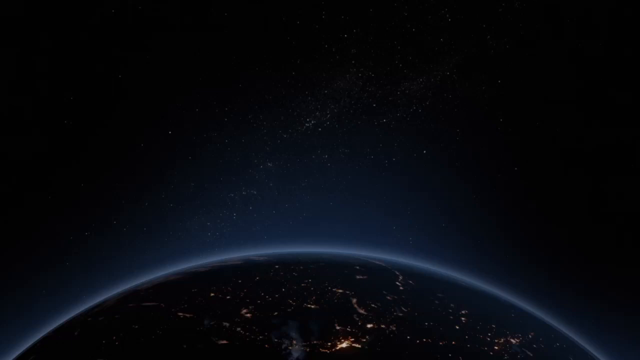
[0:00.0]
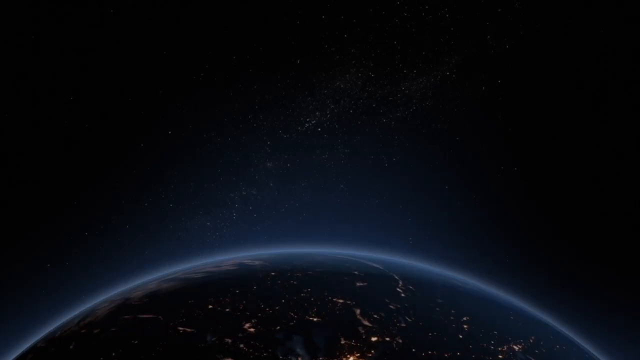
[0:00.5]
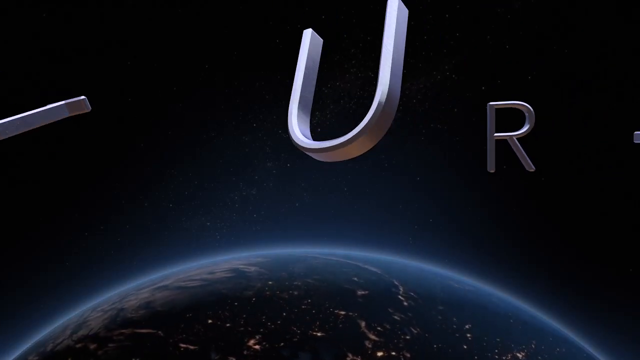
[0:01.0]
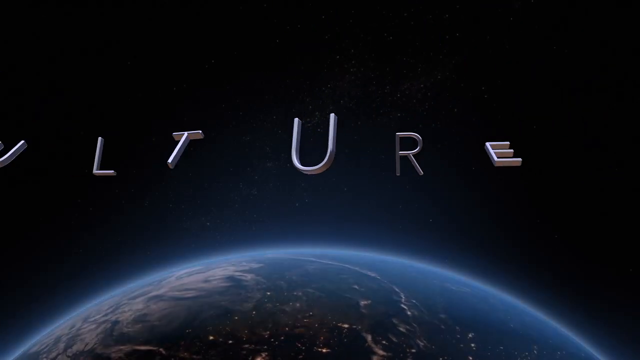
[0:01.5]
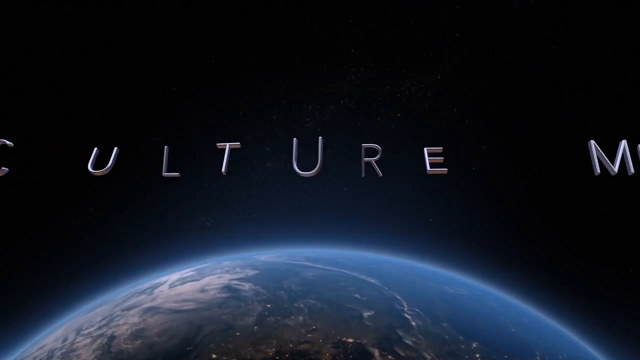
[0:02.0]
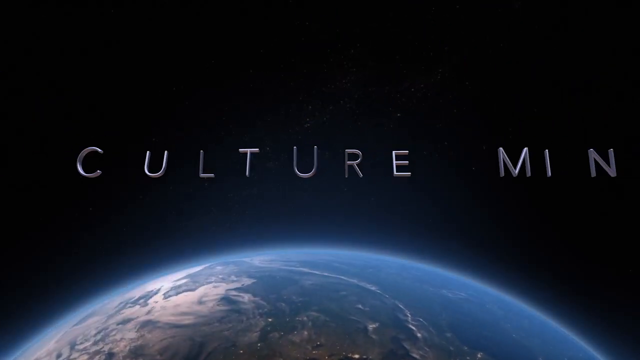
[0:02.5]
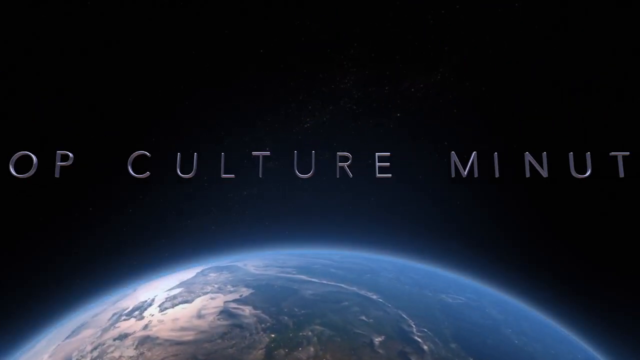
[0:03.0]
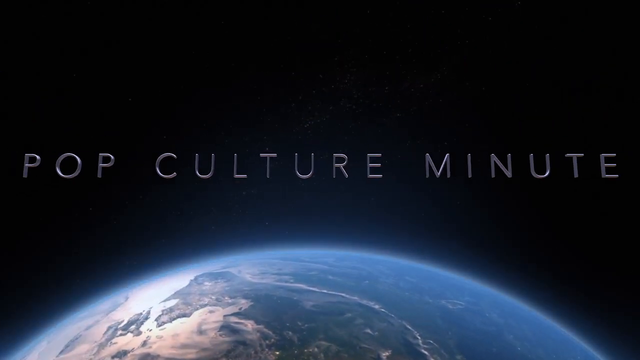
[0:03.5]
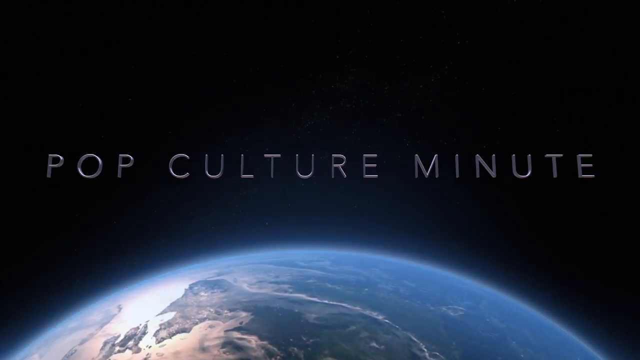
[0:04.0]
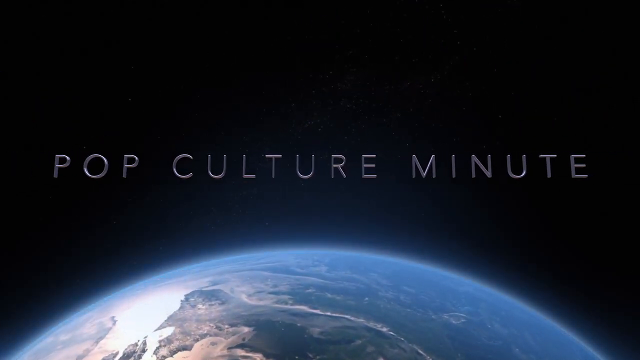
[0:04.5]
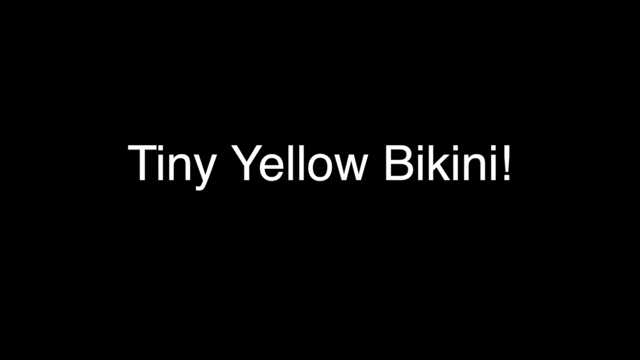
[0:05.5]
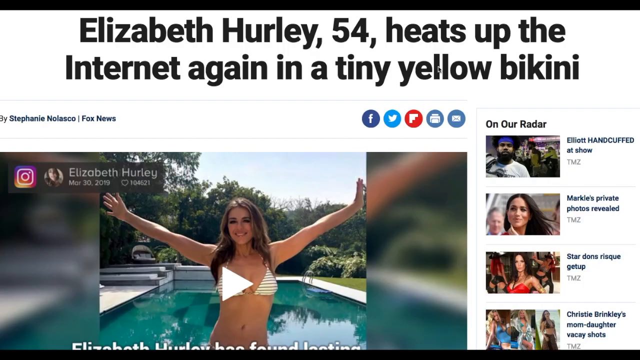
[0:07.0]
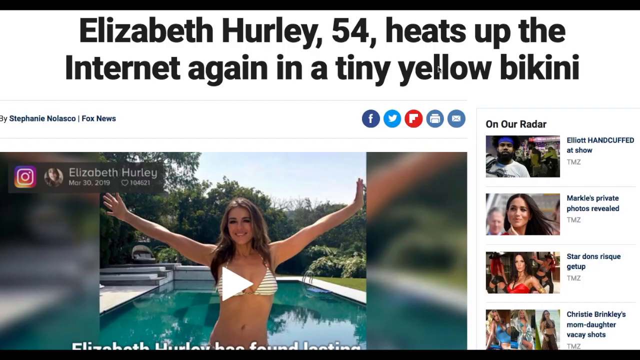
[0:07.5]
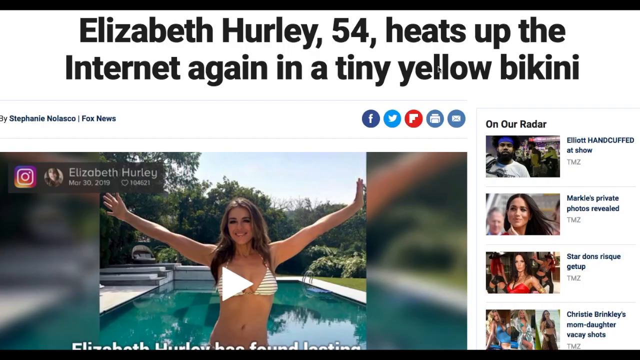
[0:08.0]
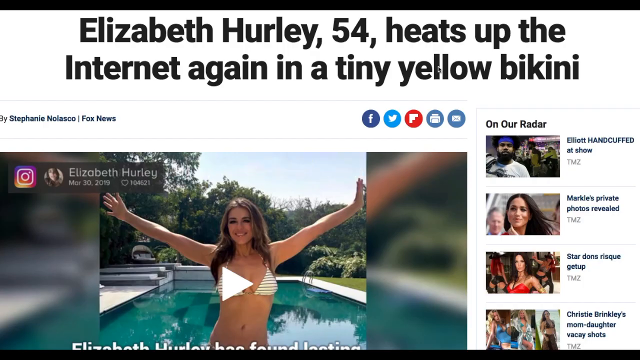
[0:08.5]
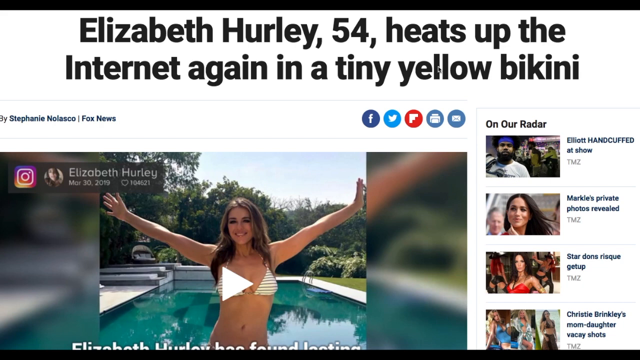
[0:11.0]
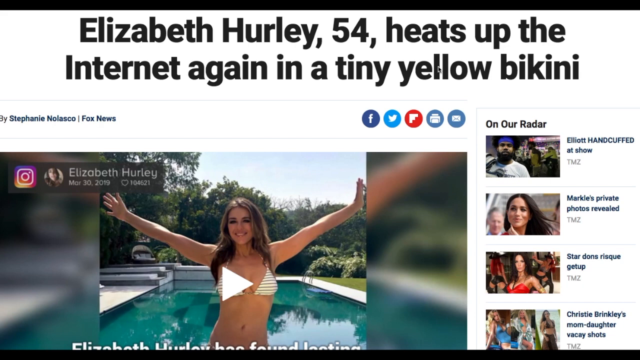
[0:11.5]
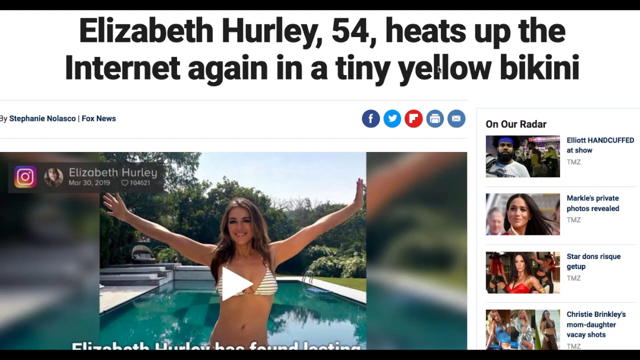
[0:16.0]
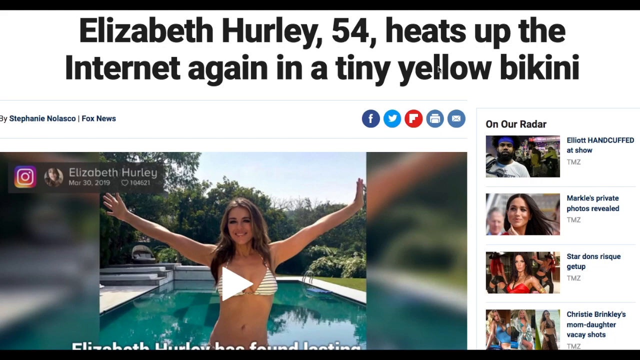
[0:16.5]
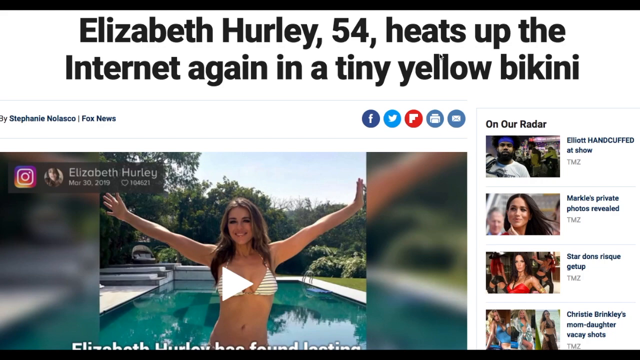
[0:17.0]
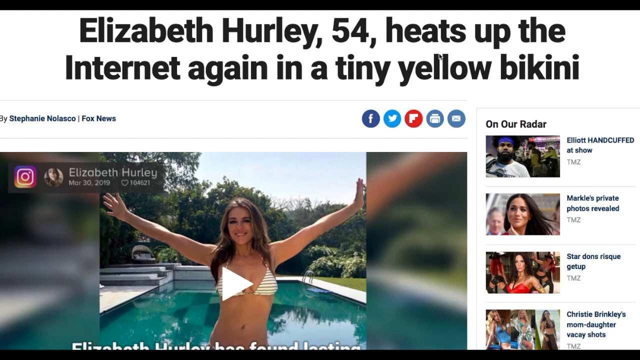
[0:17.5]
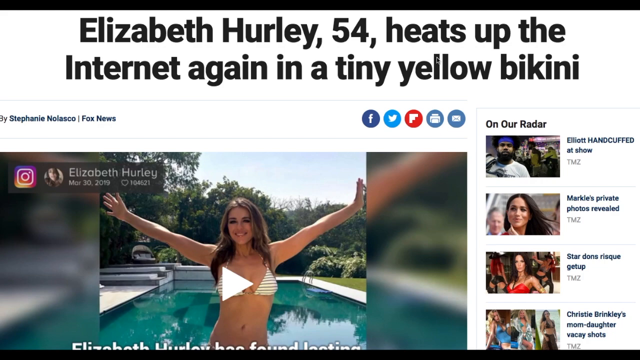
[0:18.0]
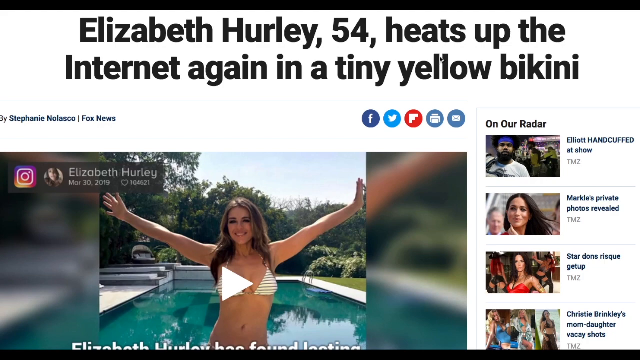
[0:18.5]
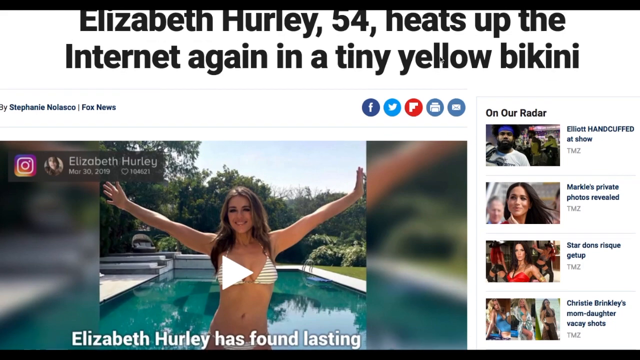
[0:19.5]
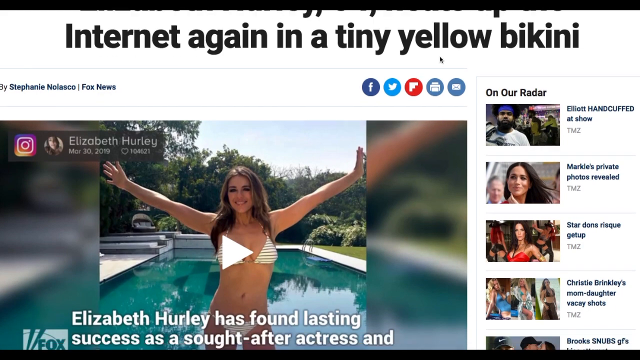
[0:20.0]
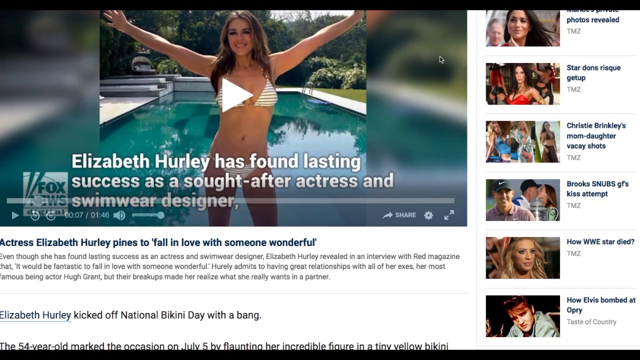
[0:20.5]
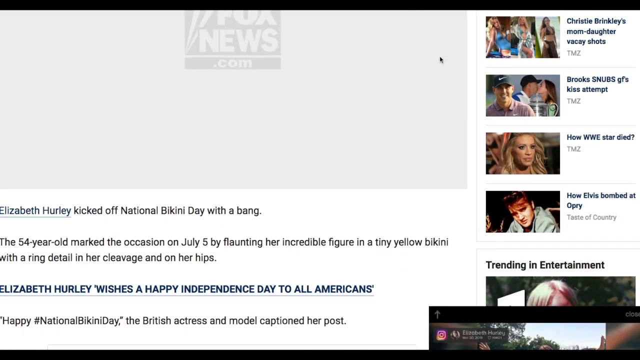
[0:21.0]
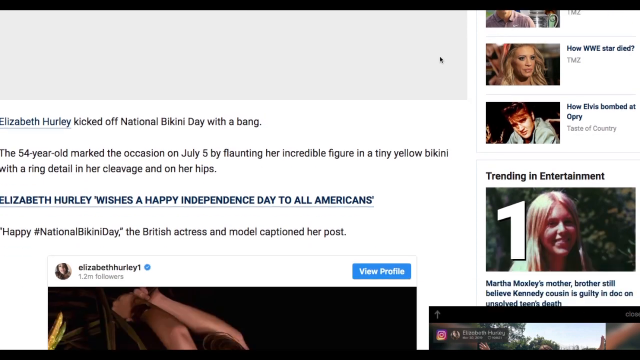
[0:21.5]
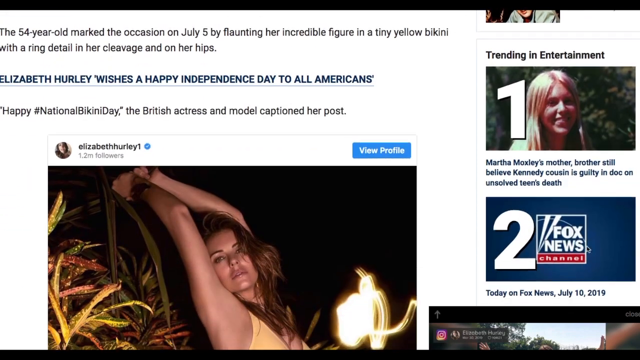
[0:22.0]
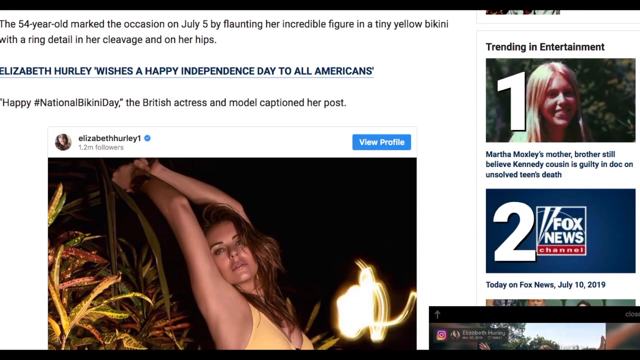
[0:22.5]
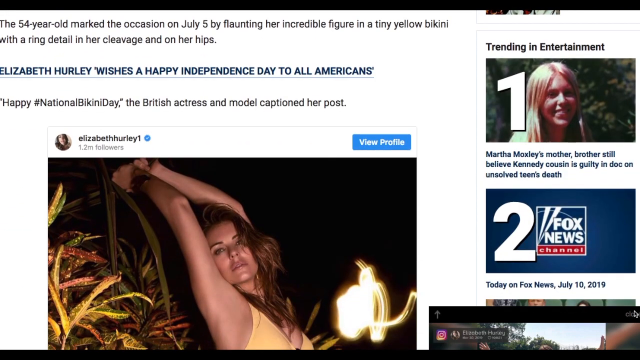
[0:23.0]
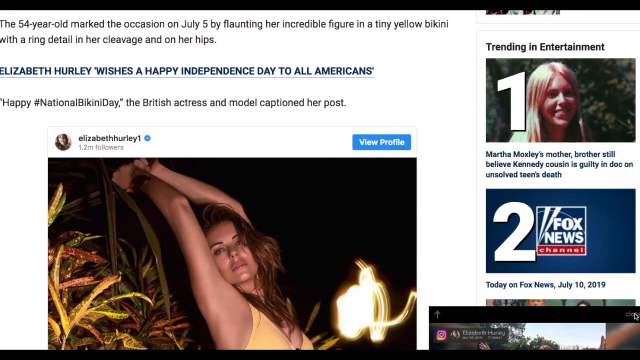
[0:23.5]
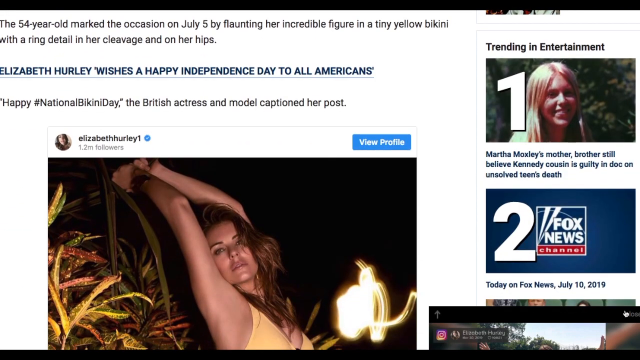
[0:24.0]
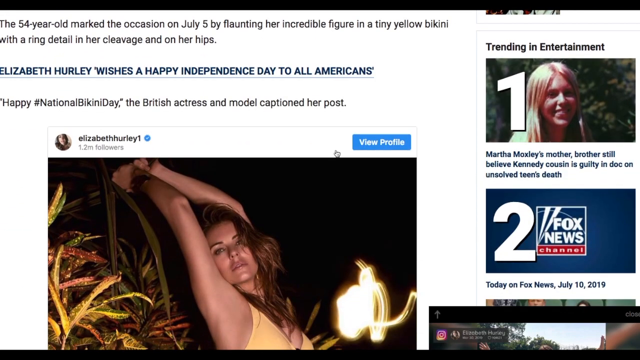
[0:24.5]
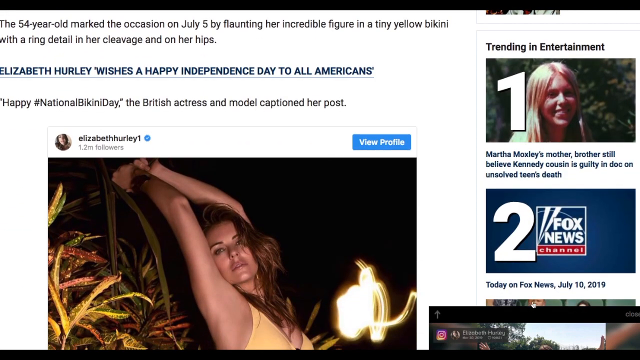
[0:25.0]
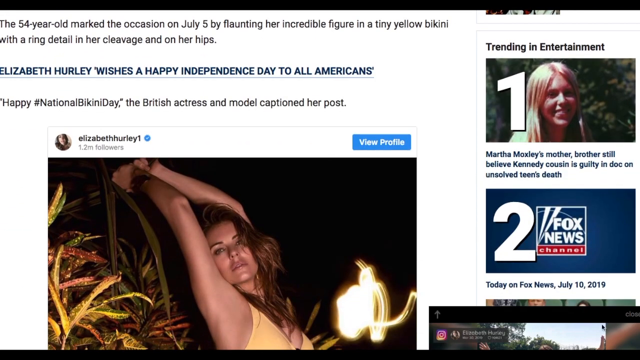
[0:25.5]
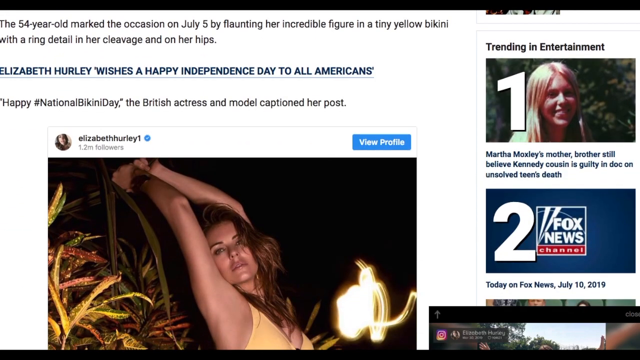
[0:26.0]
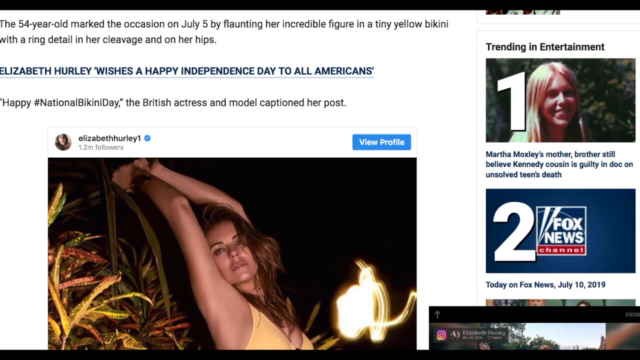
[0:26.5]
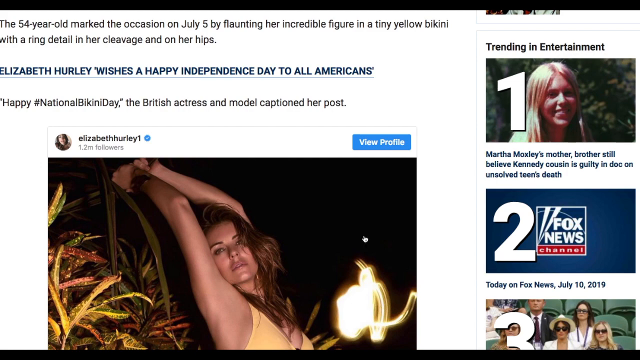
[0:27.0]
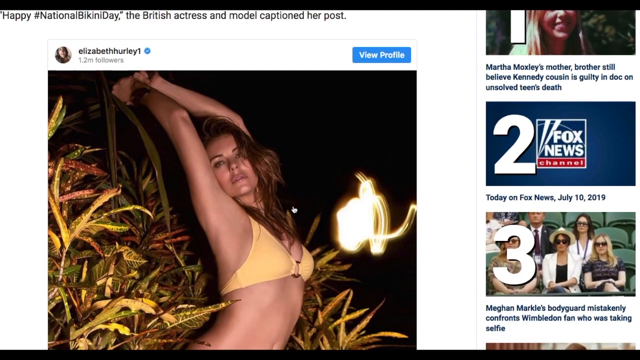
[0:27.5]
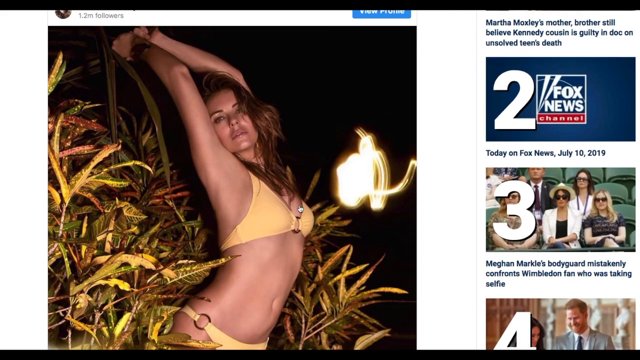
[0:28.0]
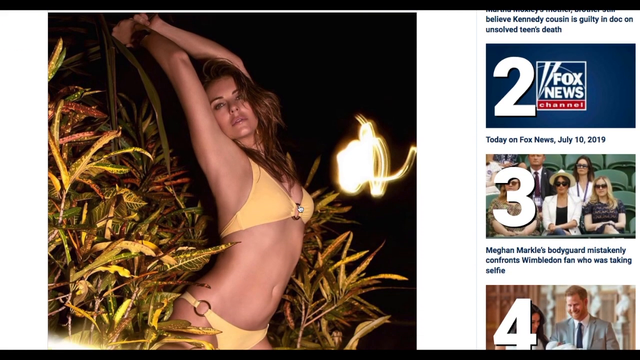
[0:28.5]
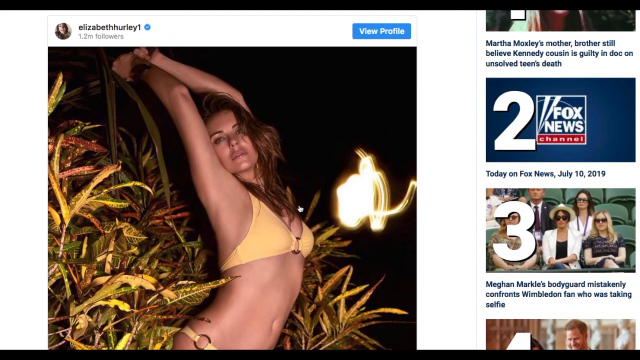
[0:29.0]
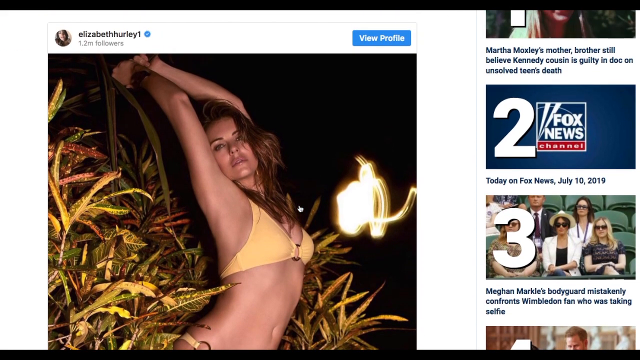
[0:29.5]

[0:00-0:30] An image of Earth appears at the bottom of the screen, with silver text at the top reading "pop culture minute." The video cuts to a slide with white text reading "tiny yellow bikini," then to a web page with a black-text header reading "Elizabeth Hurley 54 heats up the internet again in a tiny yellow bikini." Below it is a video with a white play button over a picture of Elizabeth Hurley with her arms extended outwards, and an Instagram logo on the left side of the video. On the right side are more pictures of different people under a header reading "on our radar." The camera pans down as the page is scrolled, revealing a header reading "Elizabeth Hurley has found lasting success as a sought-after actress and swimwear designer," followed by an article and a photo from Instagram of Elizabeth Hurley posing for a picture.